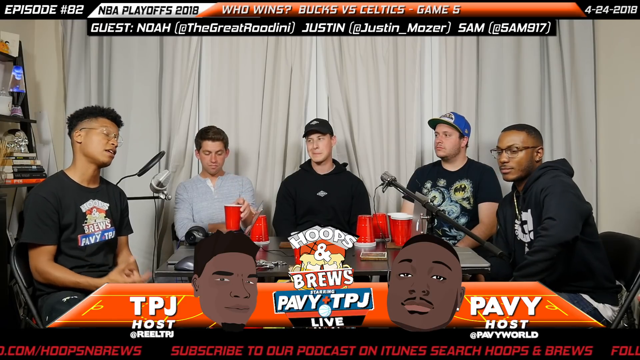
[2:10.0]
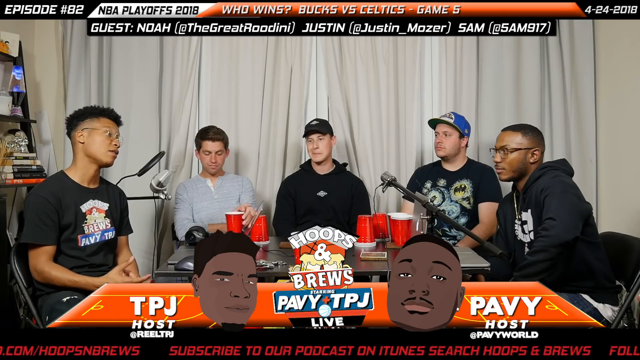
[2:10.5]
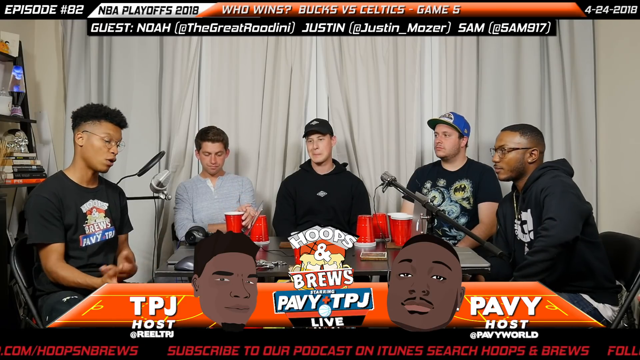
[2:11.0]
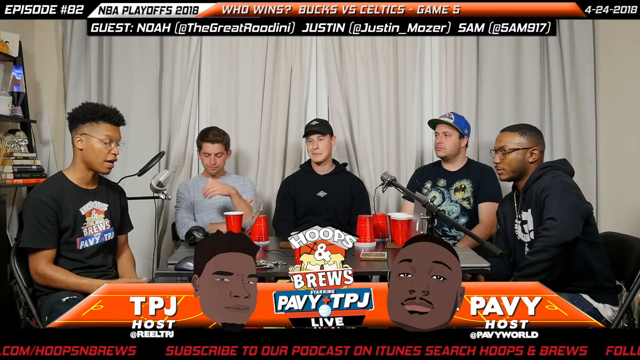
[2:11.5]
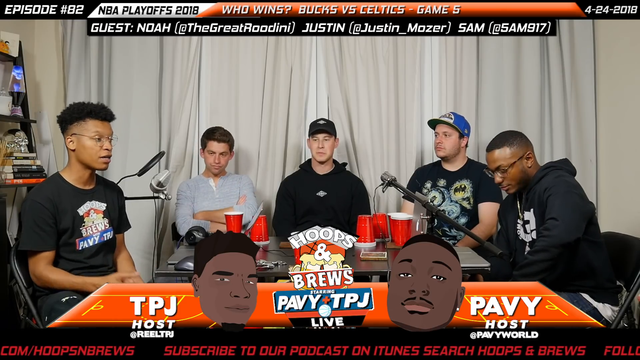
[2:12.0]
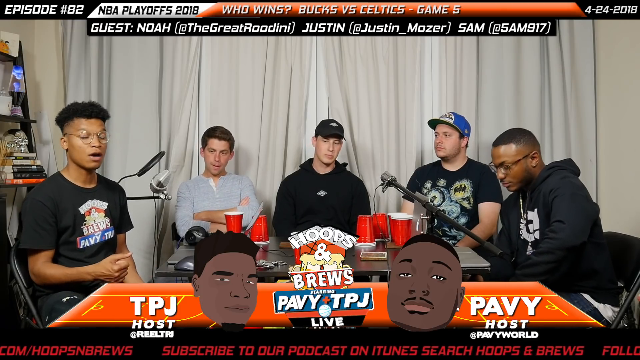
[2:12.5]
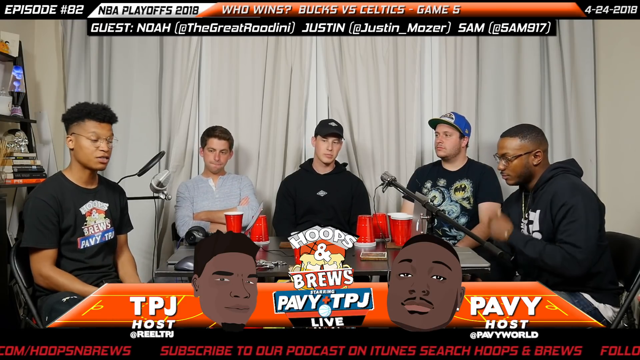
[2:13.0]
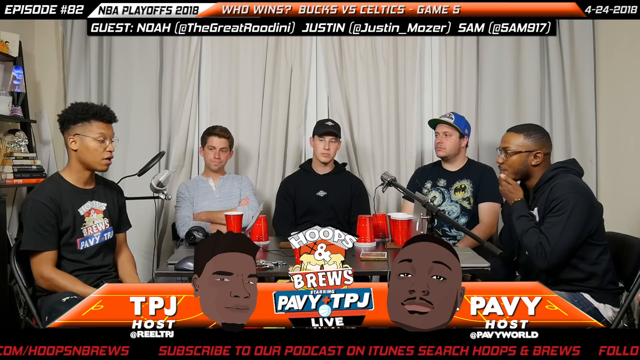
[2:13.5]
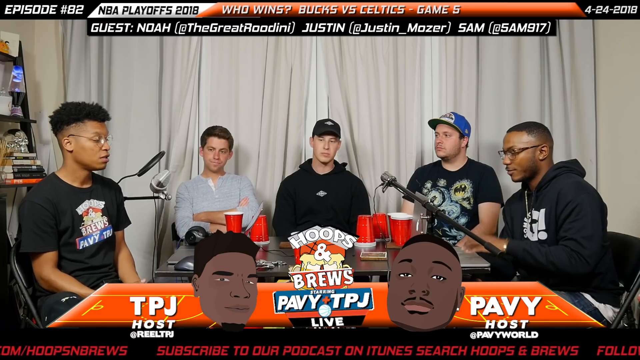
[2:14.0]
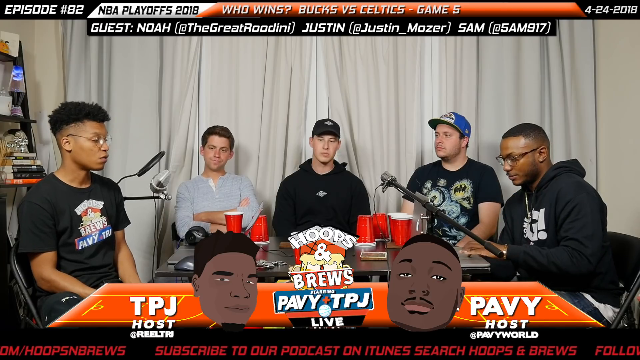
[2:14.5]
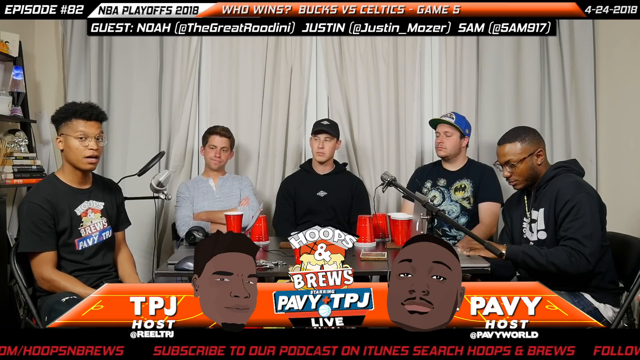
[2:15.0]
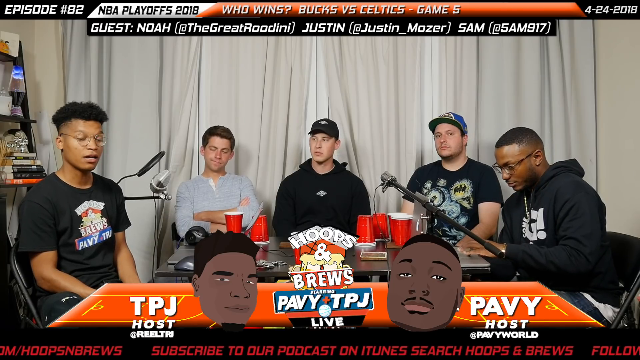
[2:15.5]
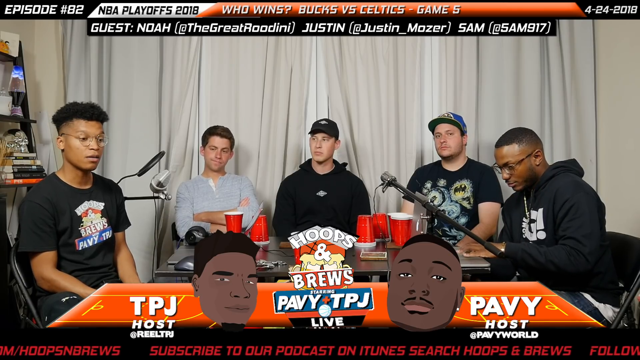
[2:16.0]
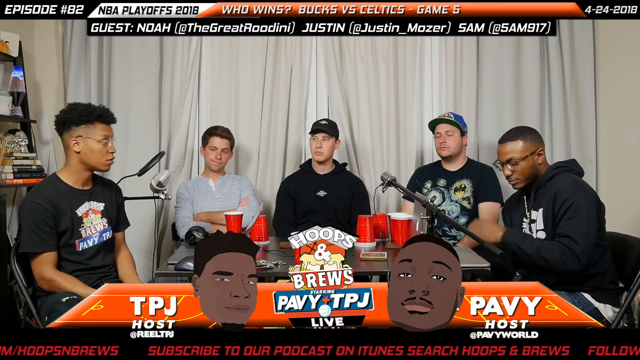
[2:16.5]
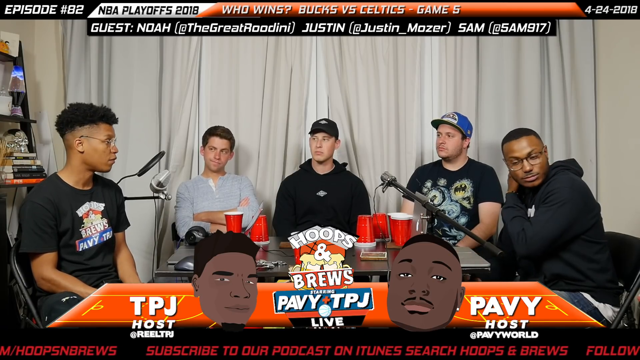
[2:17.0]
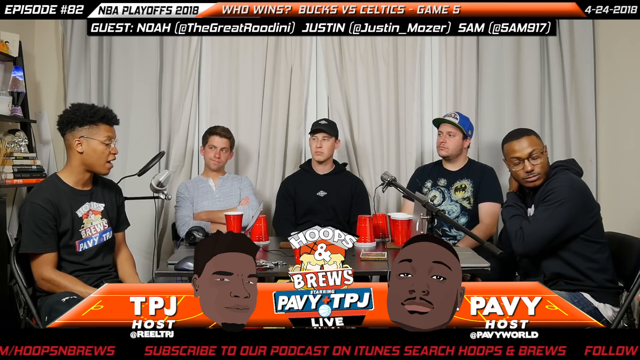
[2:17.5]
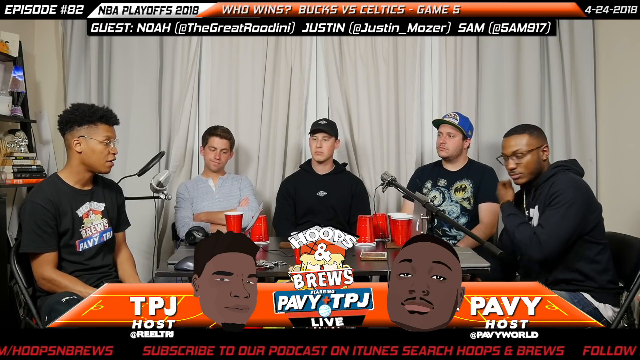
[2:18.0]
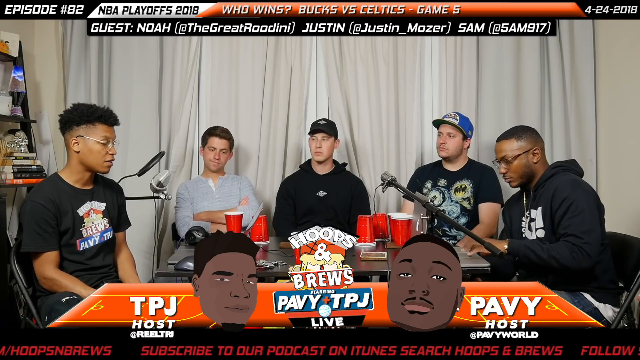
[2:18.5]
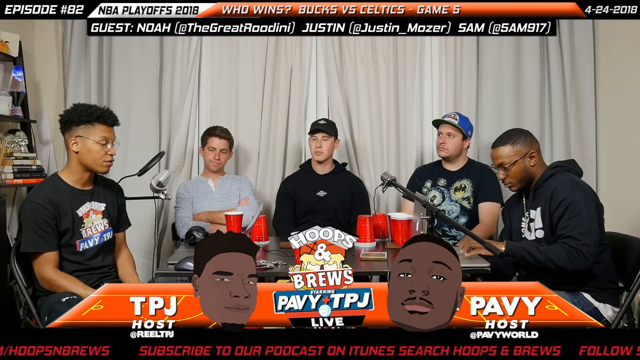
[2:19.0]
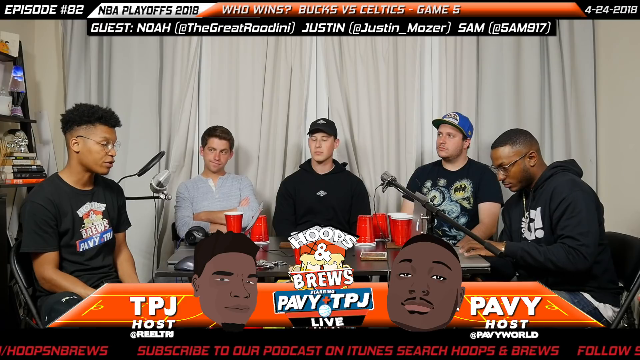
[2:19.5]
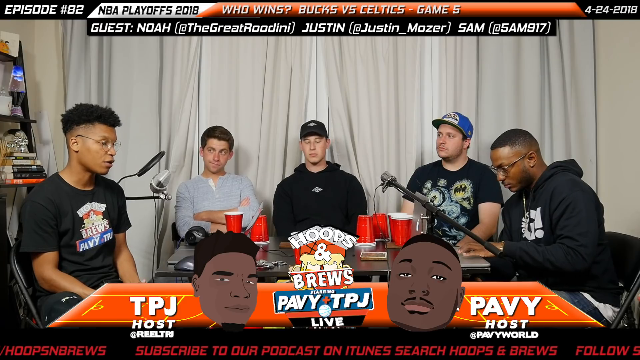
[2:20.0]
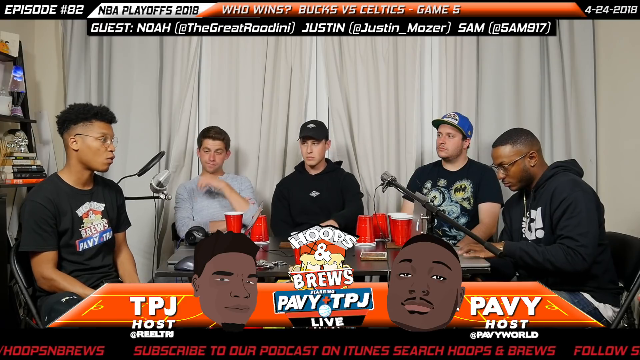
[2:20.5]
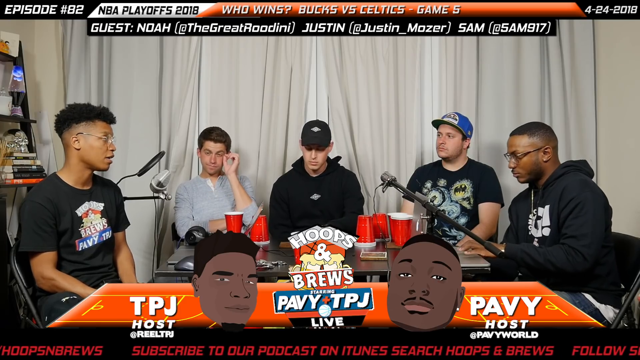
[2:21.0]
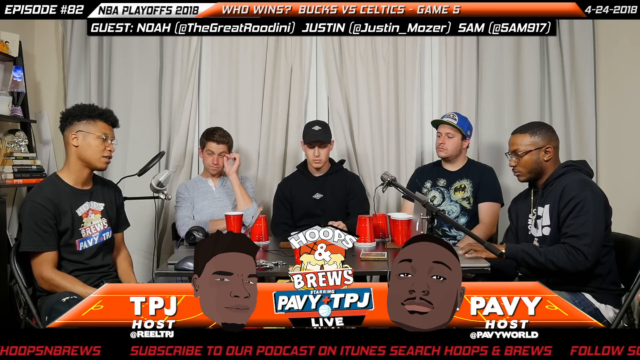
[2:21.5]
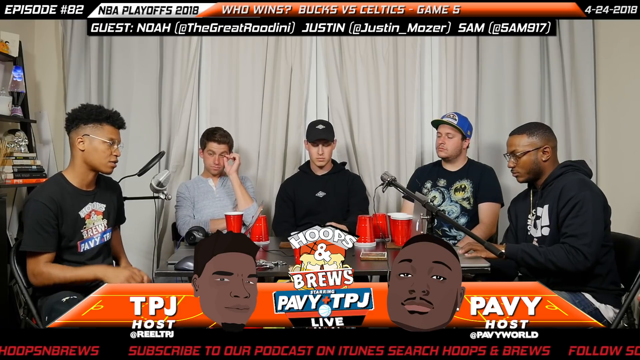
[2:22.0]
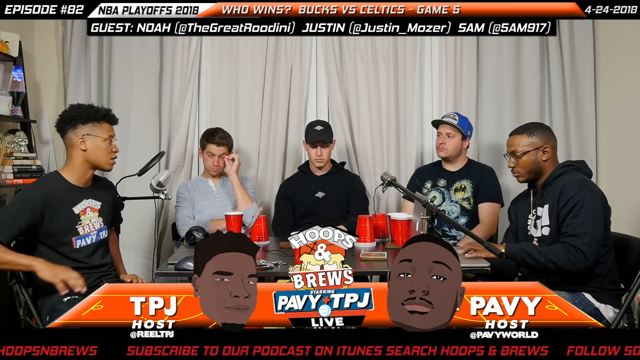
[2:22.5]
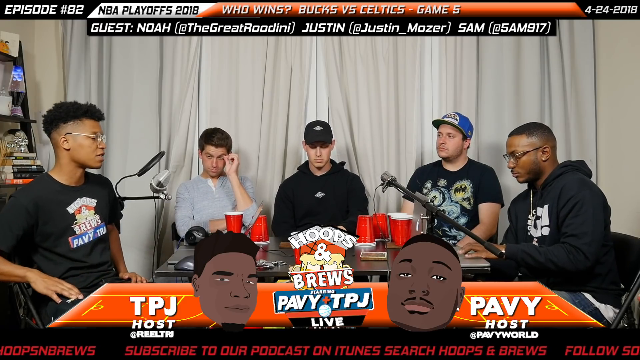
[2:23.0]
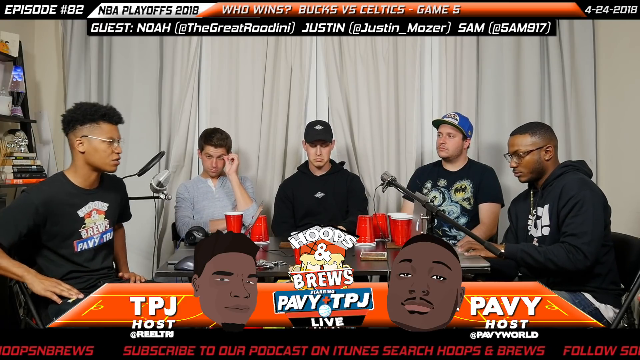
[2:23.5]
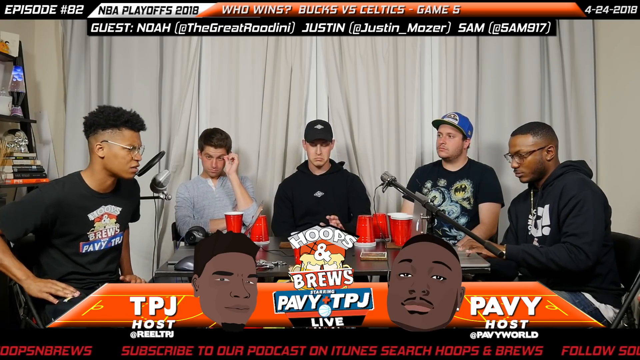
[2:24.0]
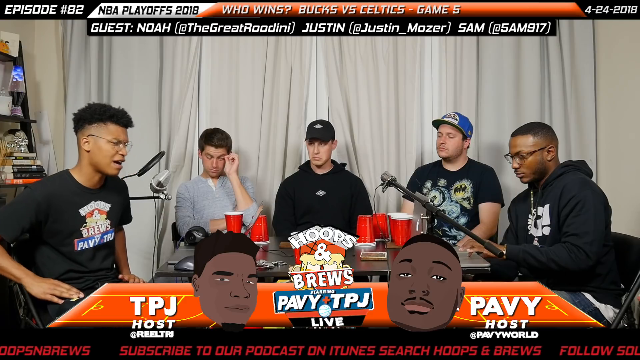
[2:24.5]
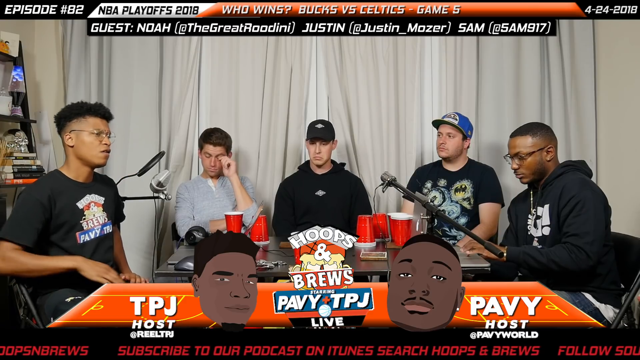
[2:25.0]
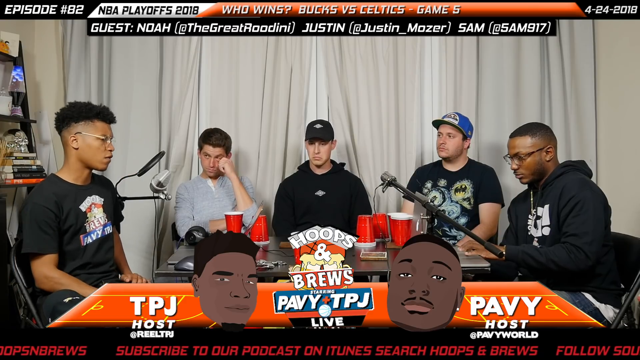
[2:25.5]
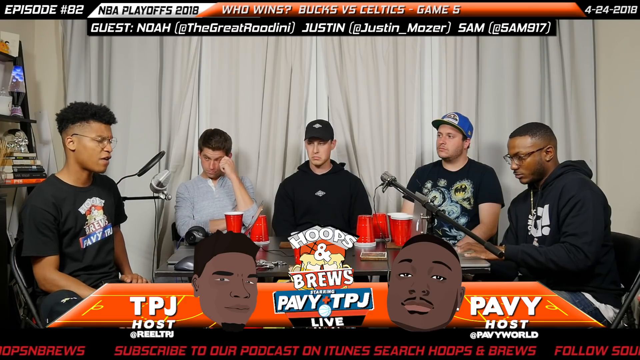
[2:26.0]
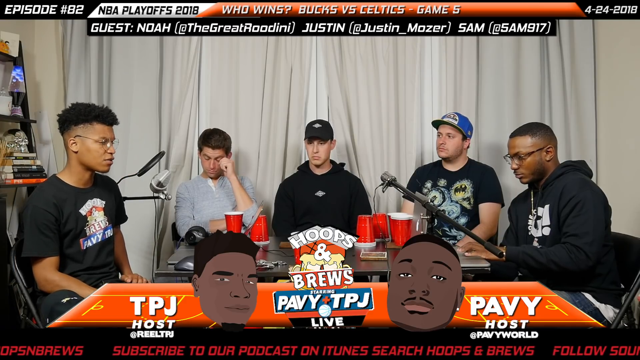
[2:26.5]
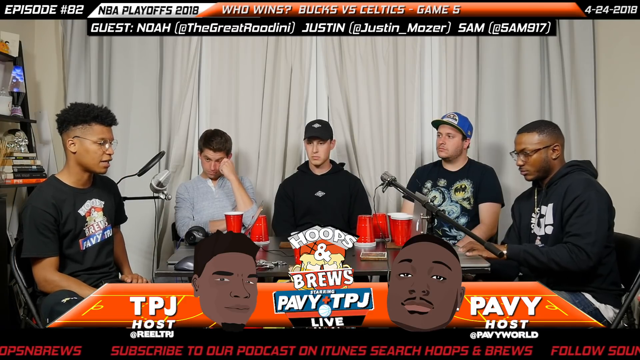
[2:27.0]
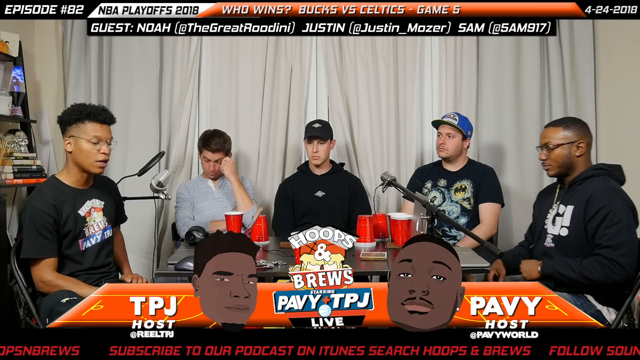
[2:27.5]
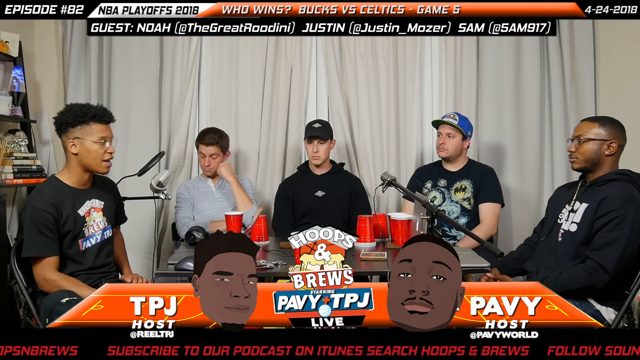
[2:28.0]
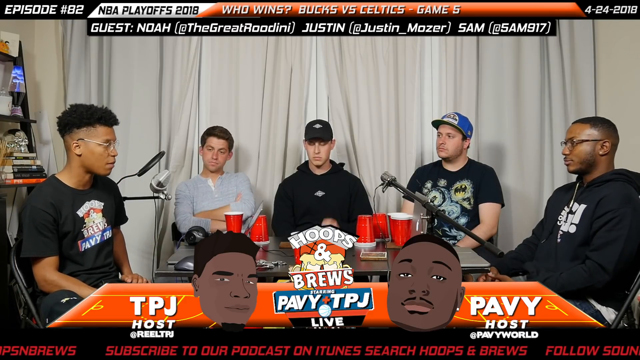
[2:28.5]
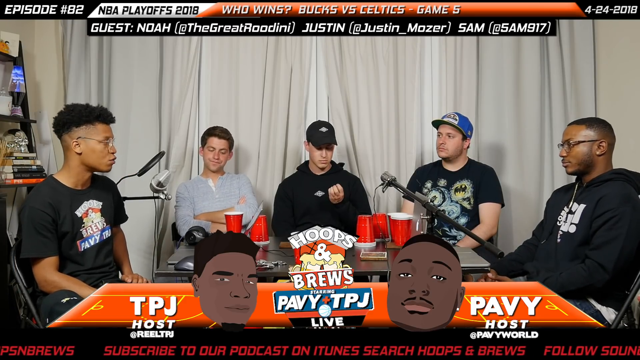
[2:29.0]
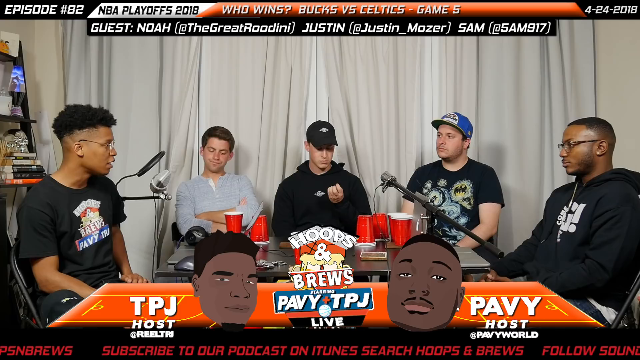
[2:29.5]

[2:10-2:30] People sit at a table with red cups and other materials on it, talking with each other in front of a light-colored tent in the background. Text at the very top of the screen asks who wins game 5 and lists the guests Noah, Justin and Sam. There is more daylight outside, so the details of the people in the room are visible.